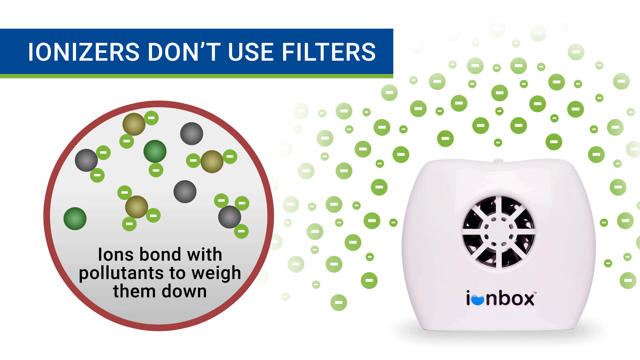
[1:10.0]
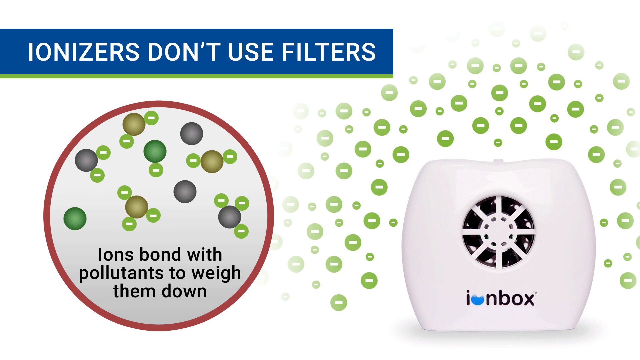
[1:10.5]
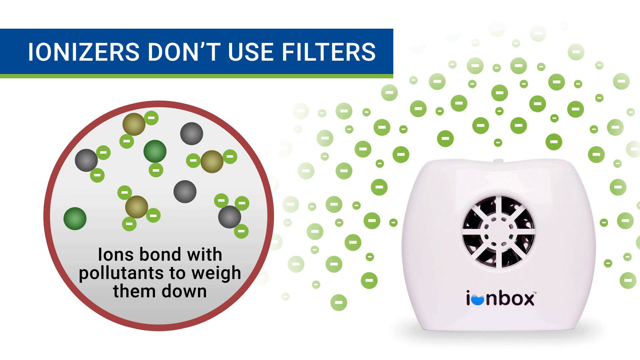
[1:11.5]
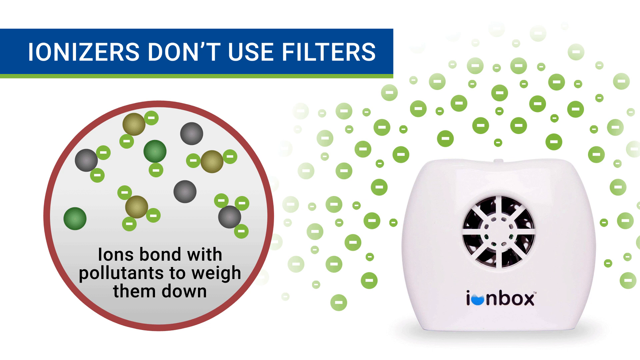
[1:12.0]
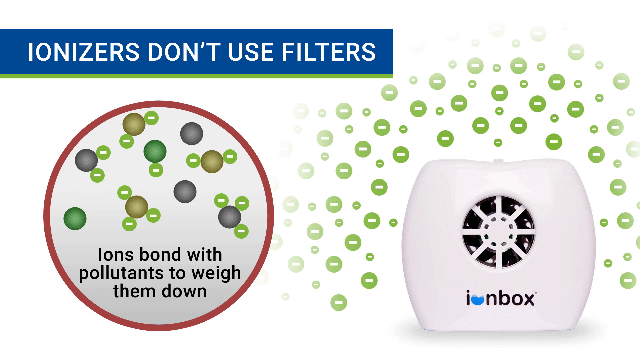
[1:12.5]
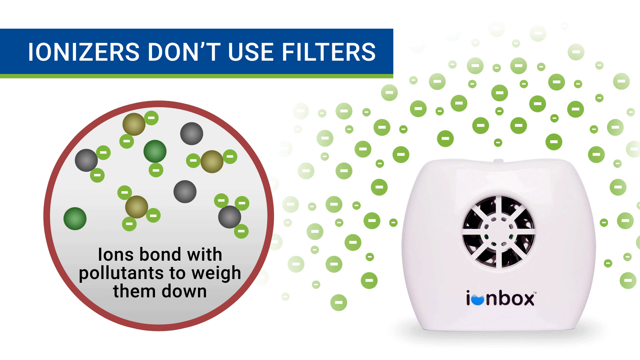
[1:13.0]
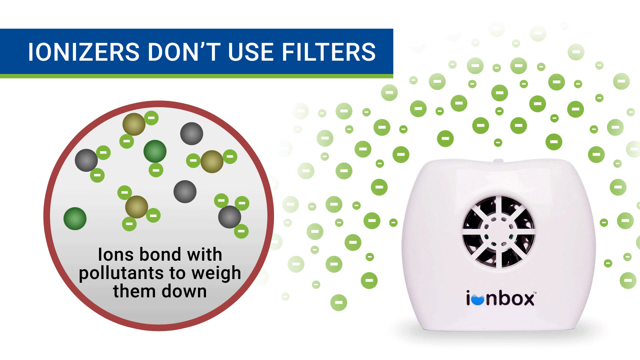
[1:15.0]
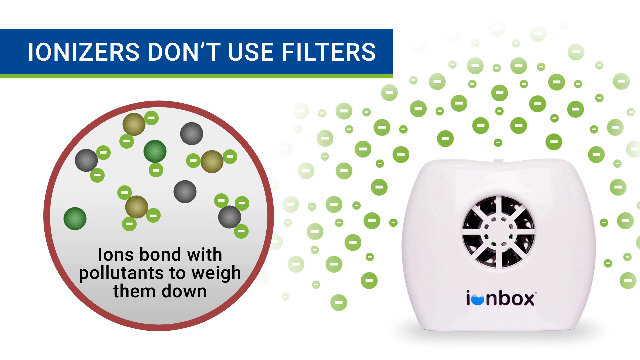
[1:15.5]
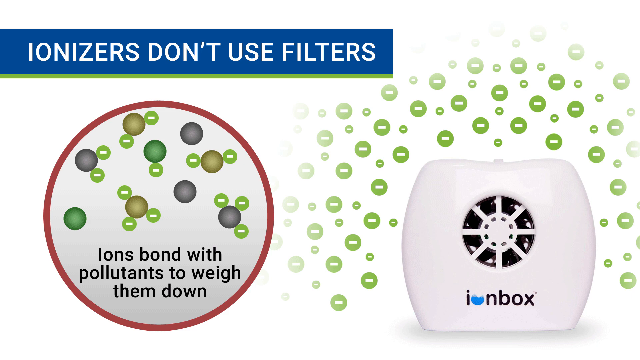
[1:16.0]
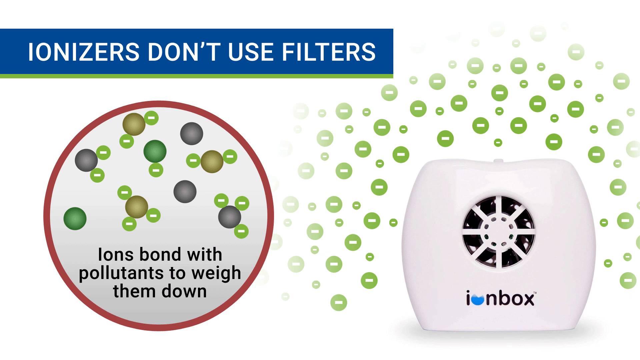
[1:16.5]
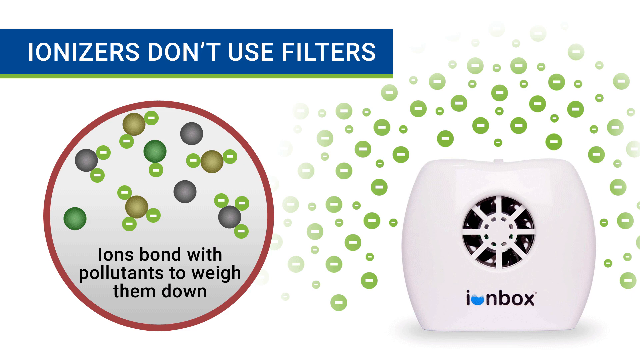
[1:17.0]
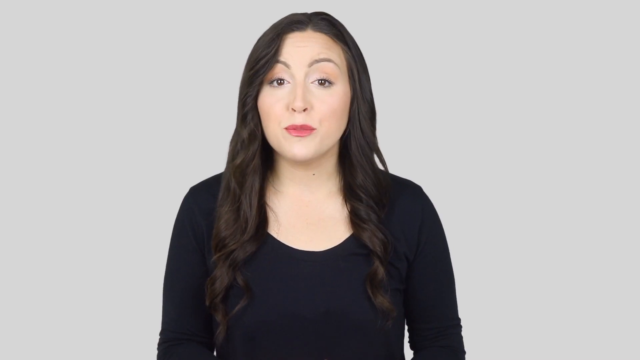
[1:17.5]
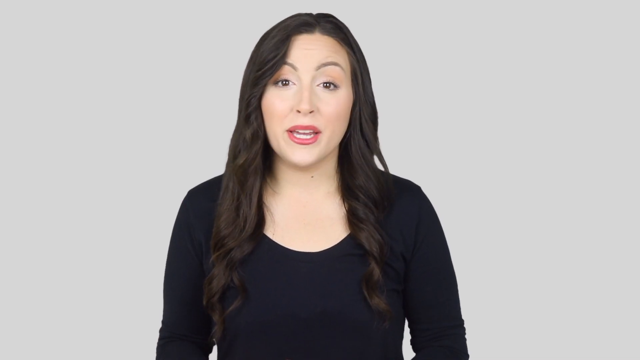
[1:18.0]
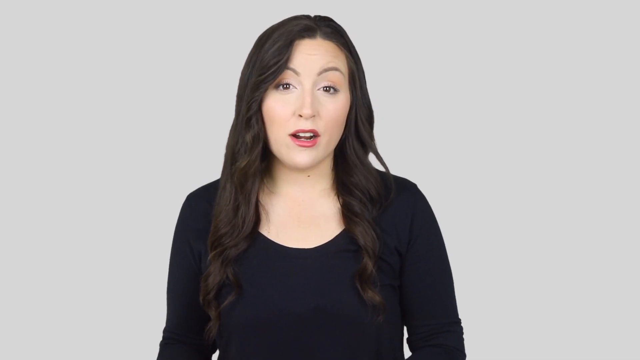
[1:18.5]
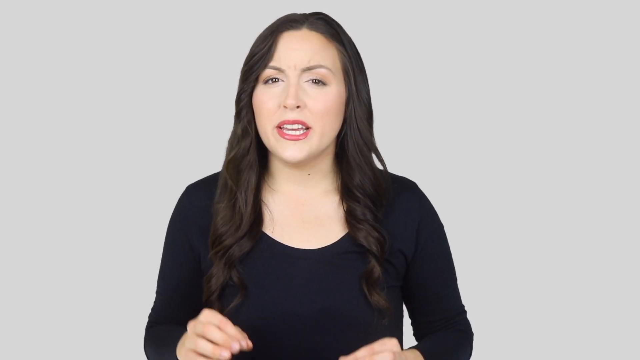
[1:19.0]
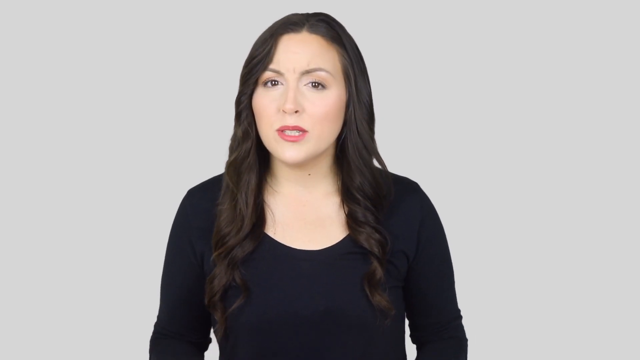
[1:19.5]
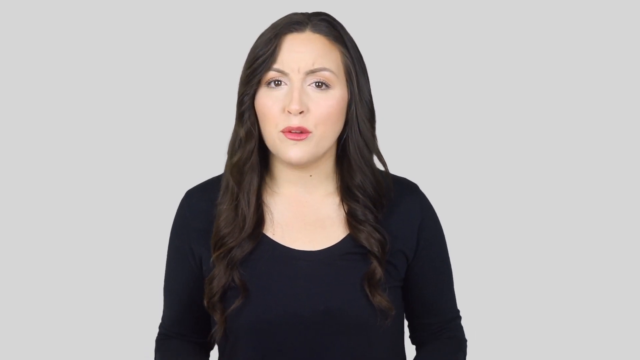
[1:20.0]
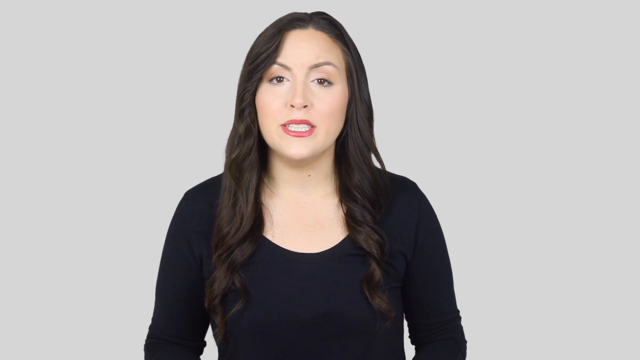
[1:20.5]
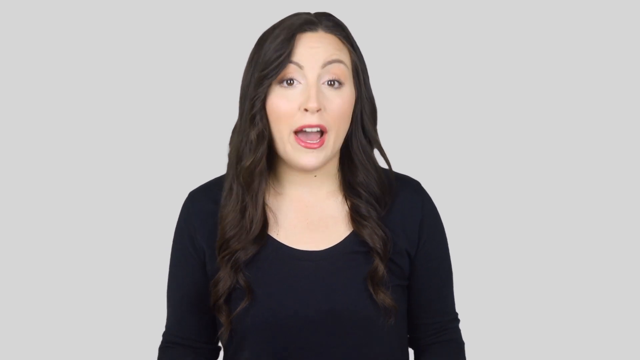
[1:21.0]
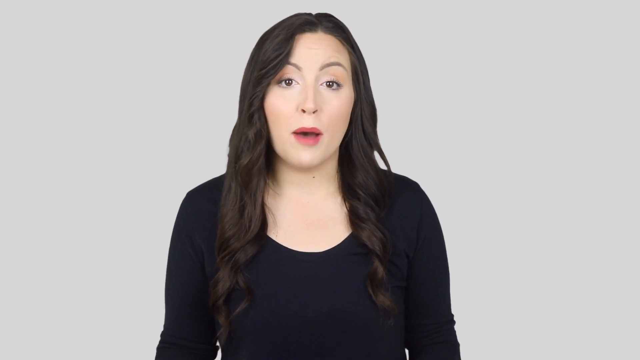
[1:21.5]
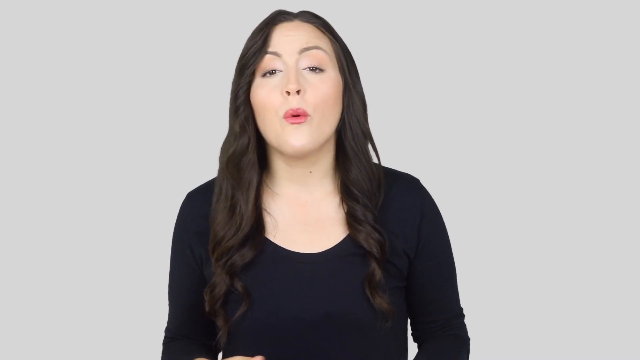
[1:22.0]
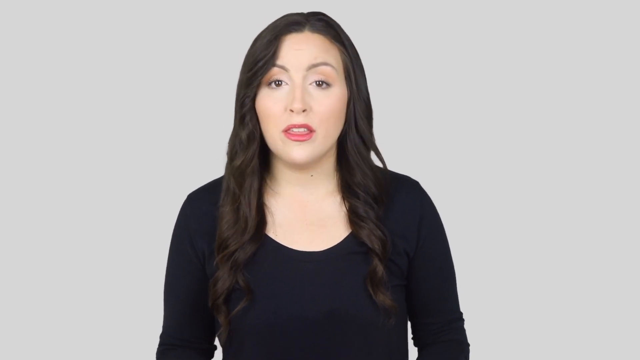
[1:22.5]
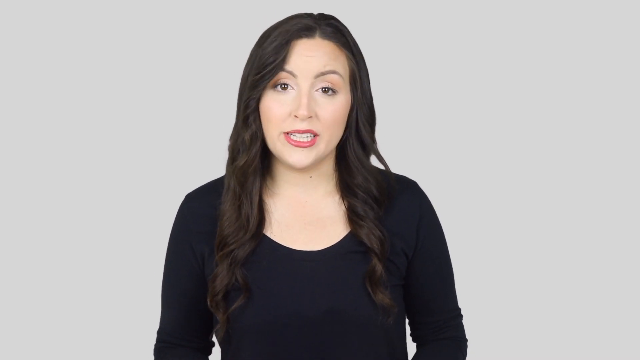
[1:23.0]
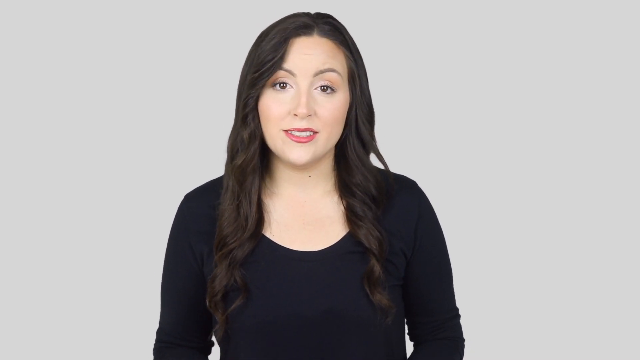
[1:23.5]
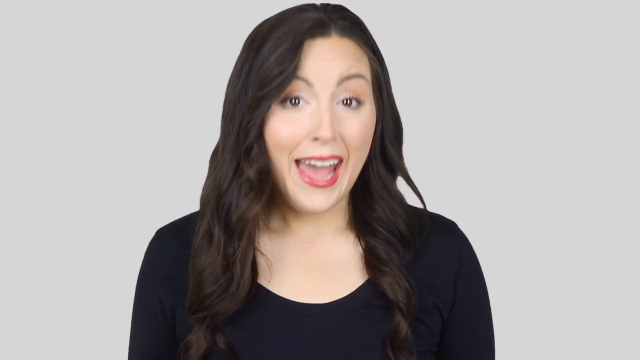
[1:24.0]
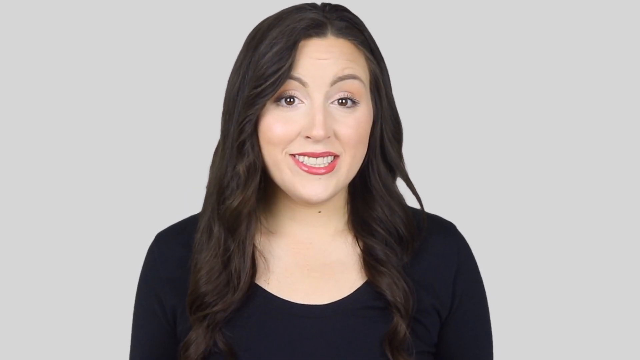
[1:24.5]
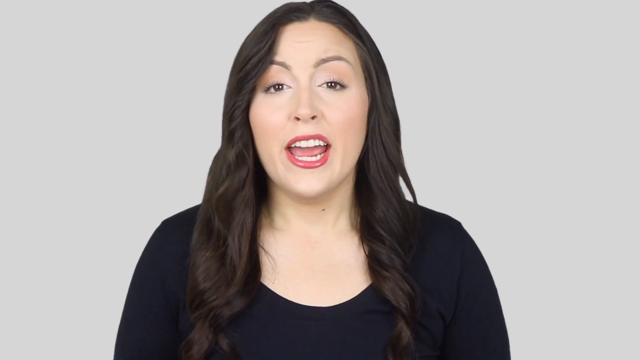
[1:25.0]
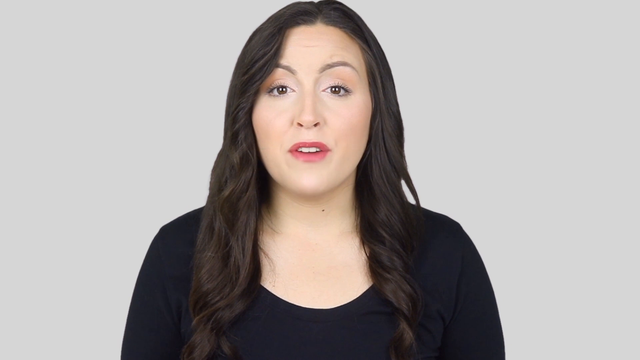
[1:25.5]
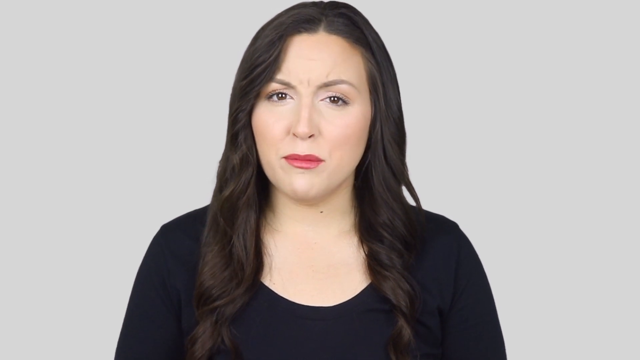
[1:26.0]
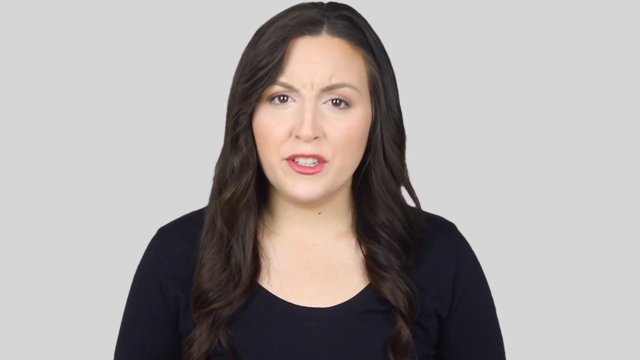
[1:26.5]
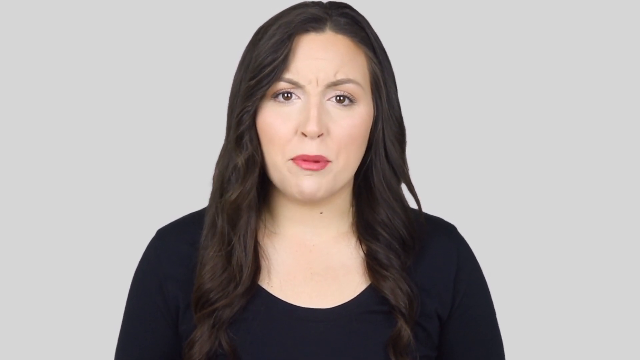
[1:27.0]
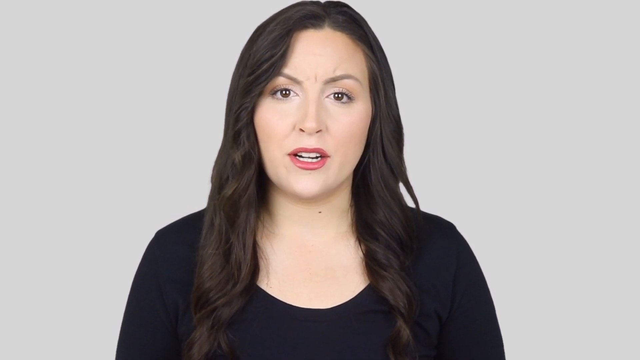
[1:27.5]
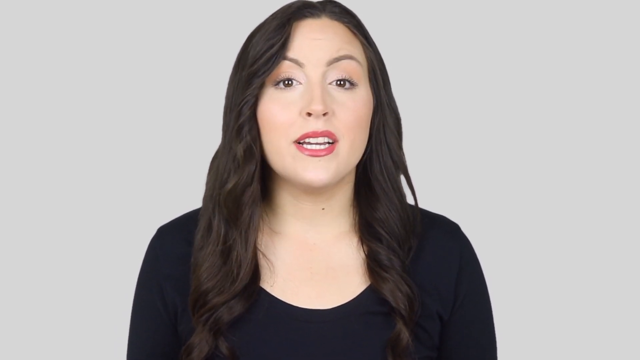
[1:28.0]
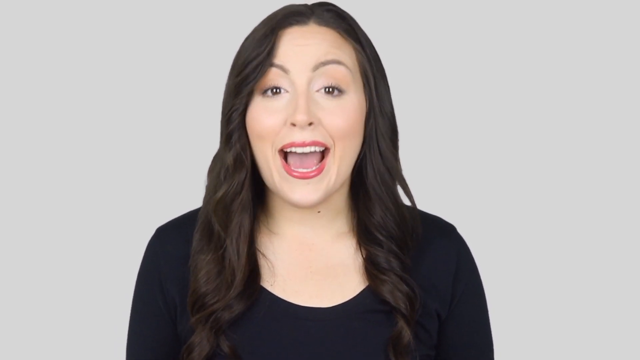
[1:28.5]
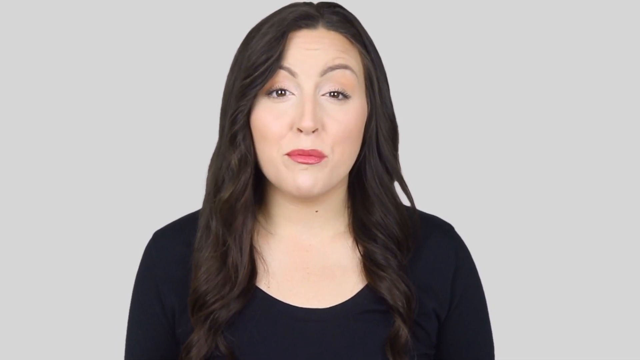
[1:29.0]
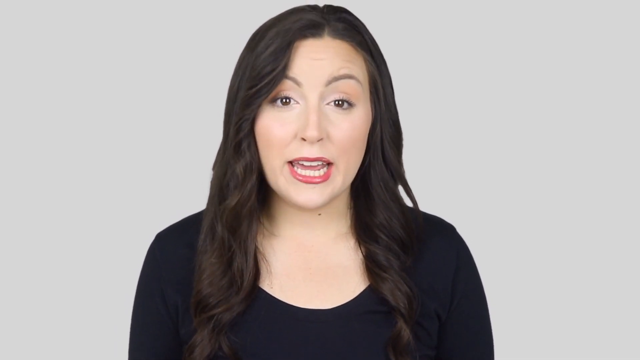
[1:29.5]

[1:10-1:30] A white background shows a blue header box in the top left corner reading "Ionizers don't use filters" in large white letters. Below it, toward the left, is a large circle with a light gray background and a thin dark red border. Inside, small gray, green and tan balls seem to float around, along with small scattered light green circles that have a white dashed line inside them. Toward the bottom of the circle, black text reads "ions bond with pollutants to weigh them down". To the right is an image of a small, white, rounded-square air purifier with a circle-like fan on the front and "Ion Box" at the bottom. On the white background to its sides and above it are many small light green circles with white dashed lines inside them, some small and some a bit bigger. The video then changes to a woman with long dark brown hair curled at the ends speaking to the camera, seen from the chest up. She has very pale skin and minimal makeup, just a little eyeshadow, foundation and dark pink lipstick, and wears a long-sleeve black shirt. She somewhat scrunches her eyebrows together as she speaks, looking a little concerned, then raises her eyebrows high. The camera appears to zoom in a bit closer to her face; she smiles widely with her eyebrows raised, then scrunches them together again, looking a bit more concerned.